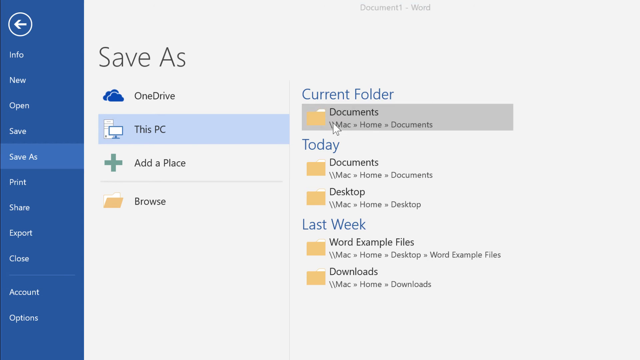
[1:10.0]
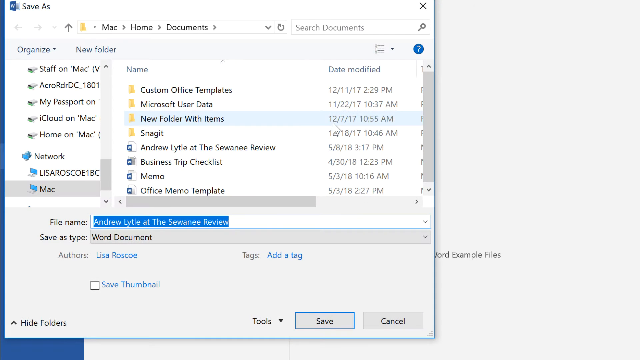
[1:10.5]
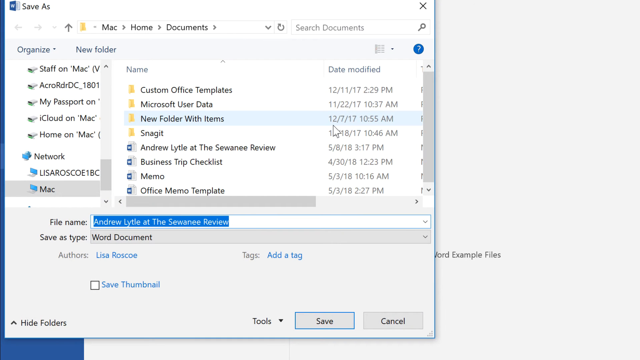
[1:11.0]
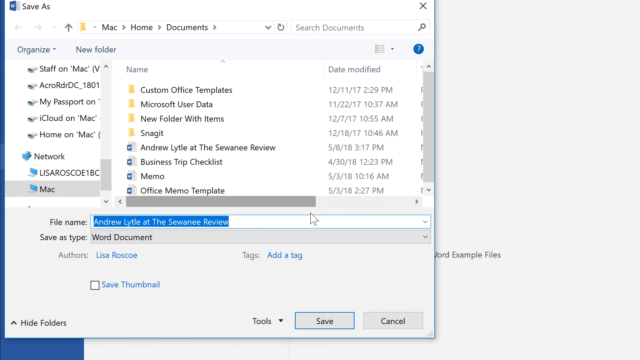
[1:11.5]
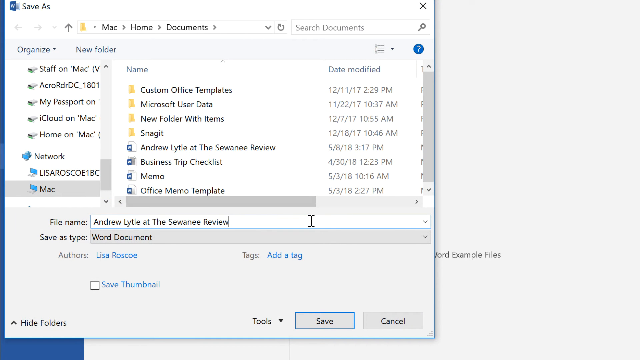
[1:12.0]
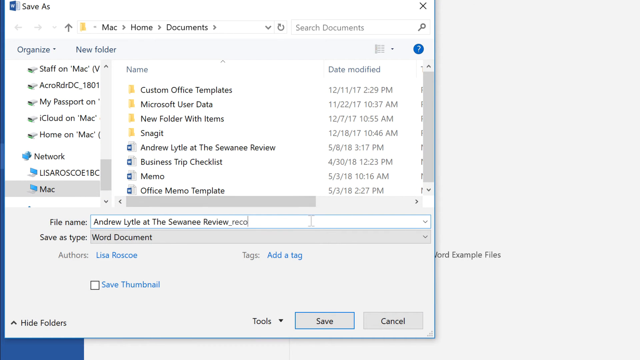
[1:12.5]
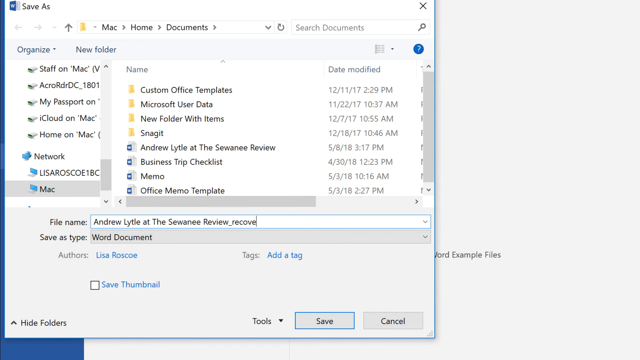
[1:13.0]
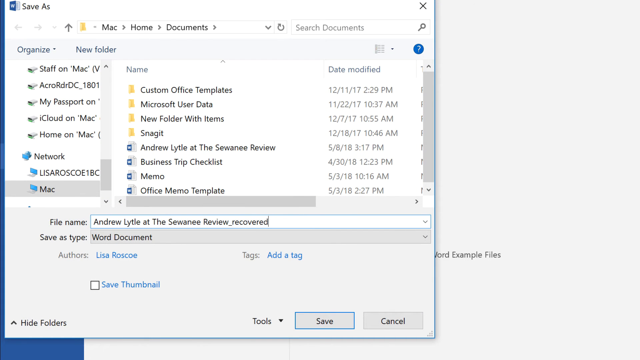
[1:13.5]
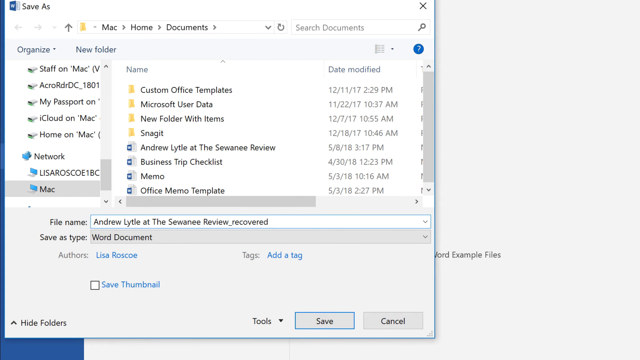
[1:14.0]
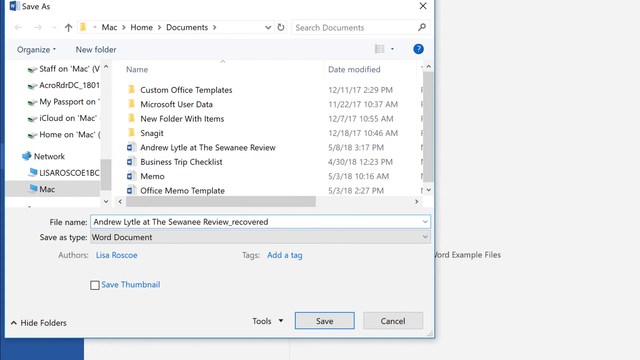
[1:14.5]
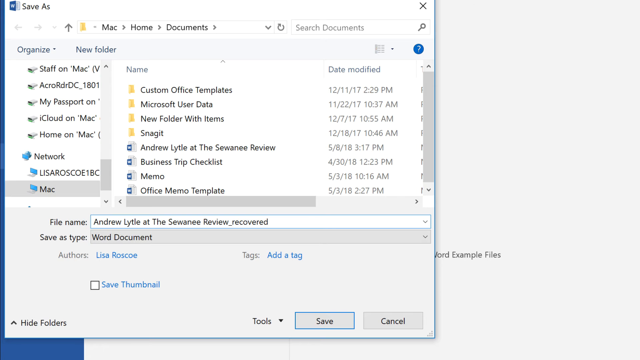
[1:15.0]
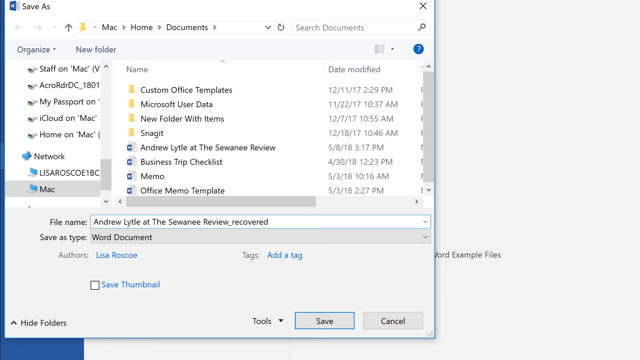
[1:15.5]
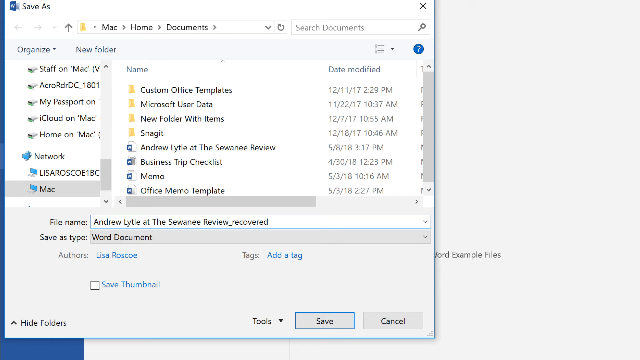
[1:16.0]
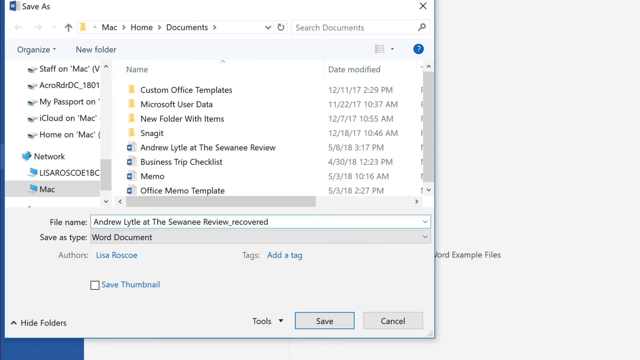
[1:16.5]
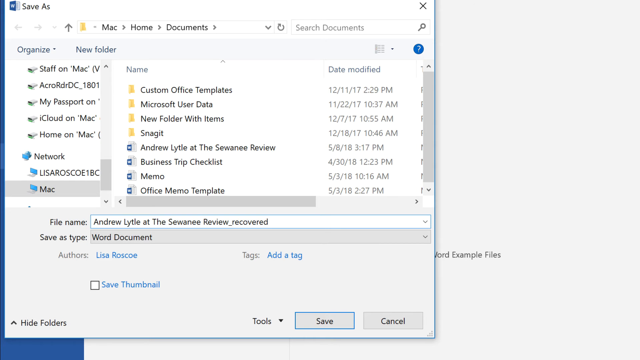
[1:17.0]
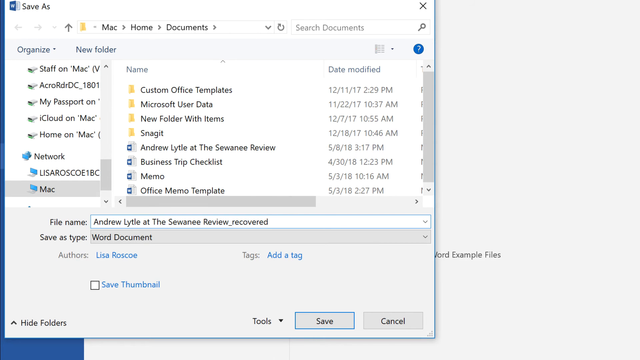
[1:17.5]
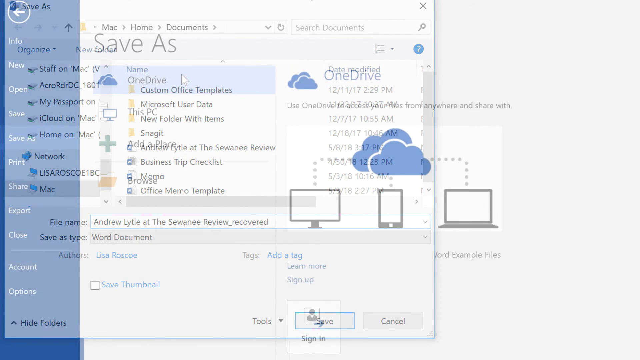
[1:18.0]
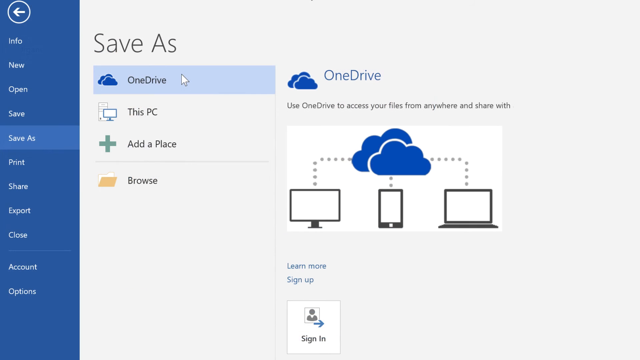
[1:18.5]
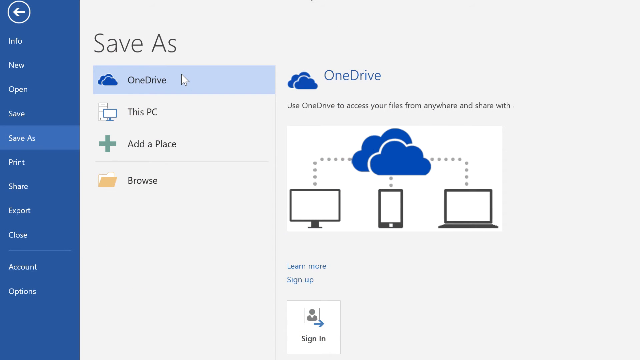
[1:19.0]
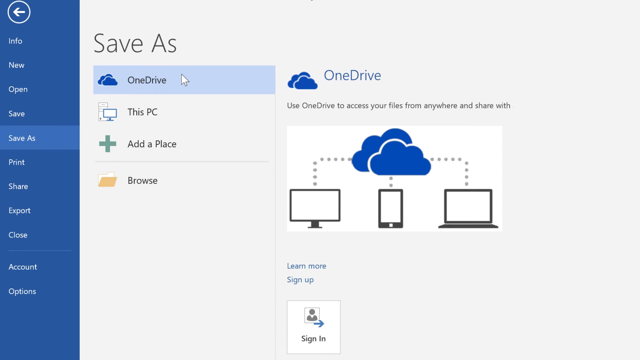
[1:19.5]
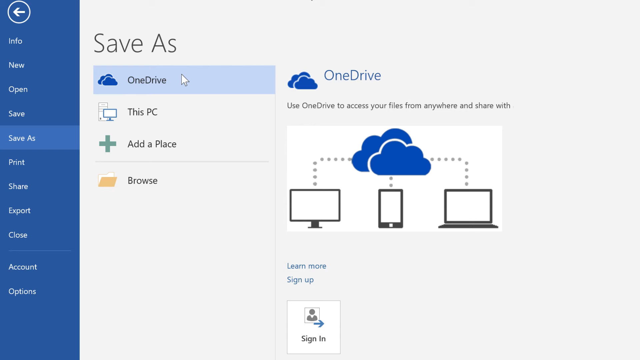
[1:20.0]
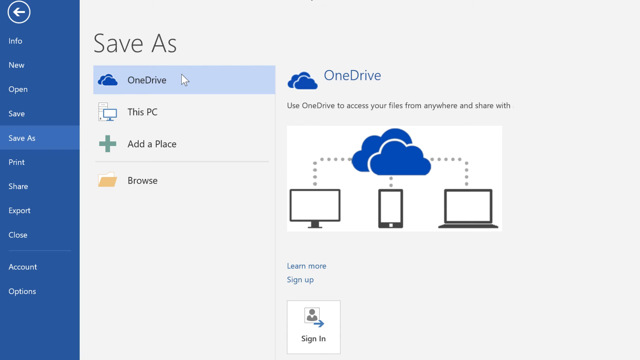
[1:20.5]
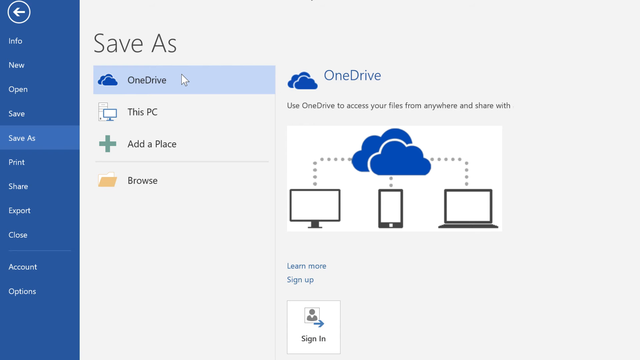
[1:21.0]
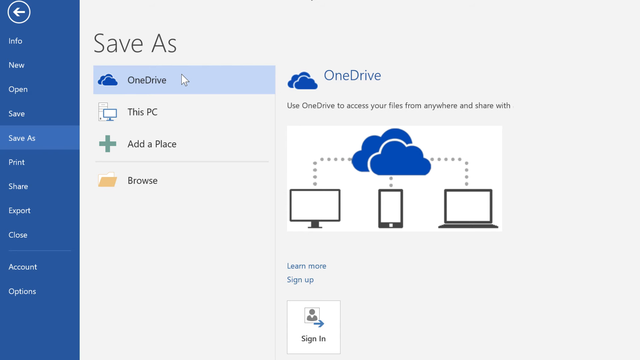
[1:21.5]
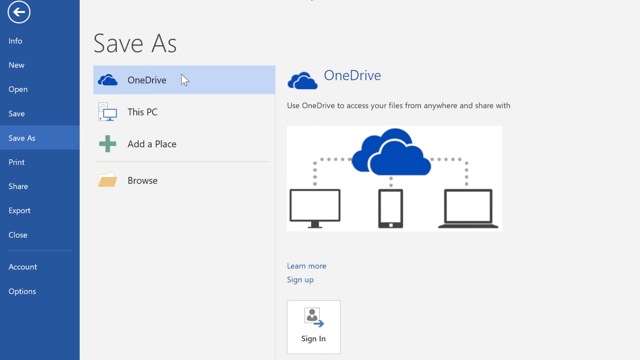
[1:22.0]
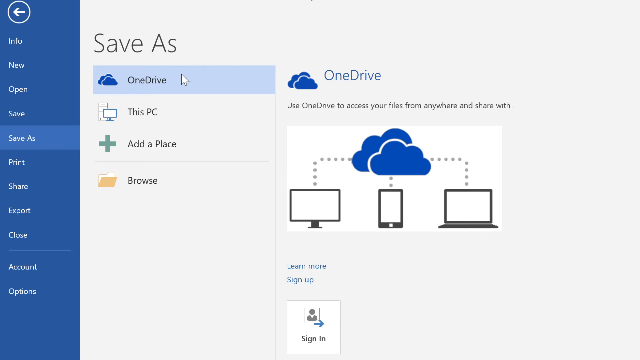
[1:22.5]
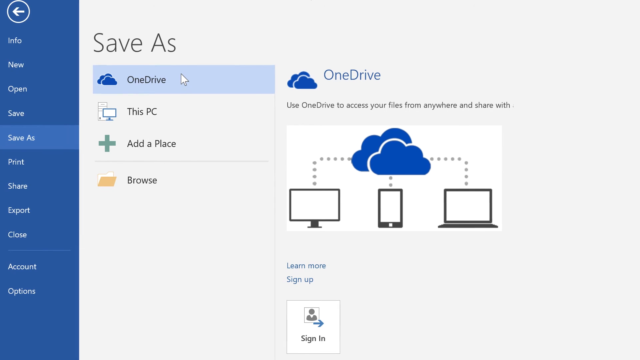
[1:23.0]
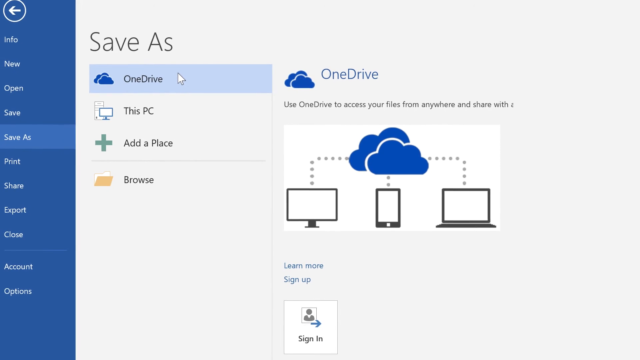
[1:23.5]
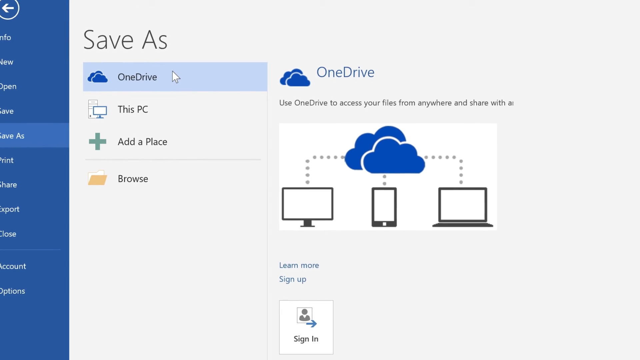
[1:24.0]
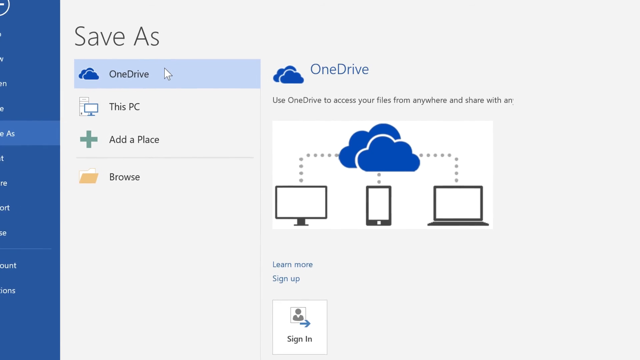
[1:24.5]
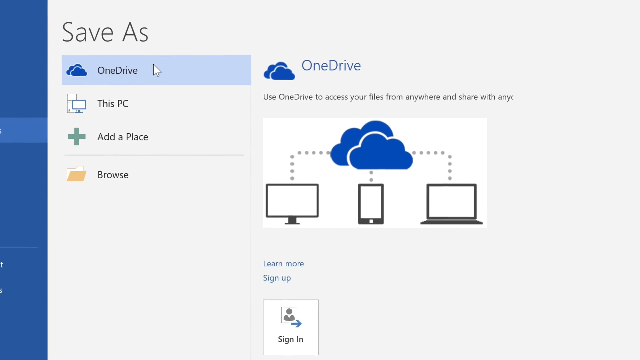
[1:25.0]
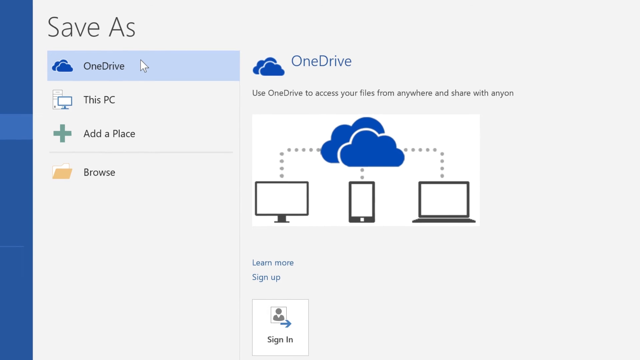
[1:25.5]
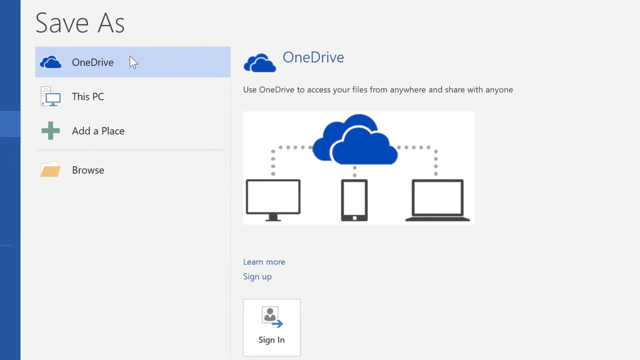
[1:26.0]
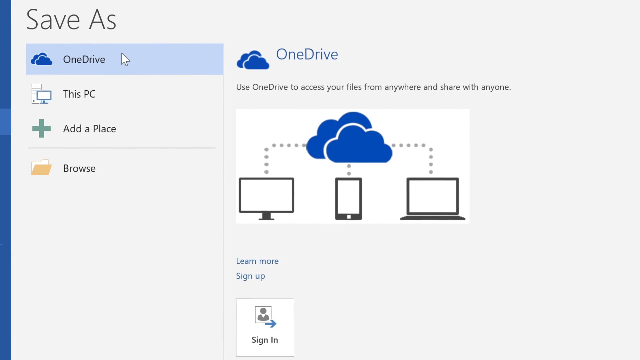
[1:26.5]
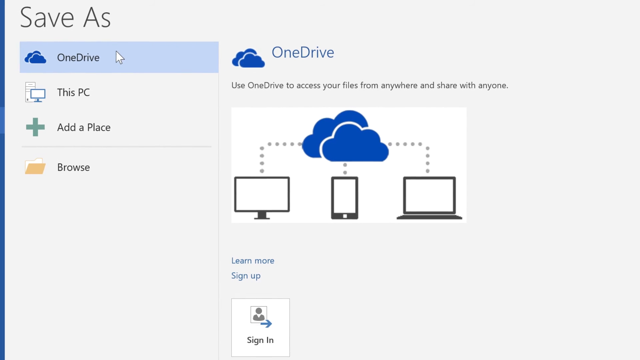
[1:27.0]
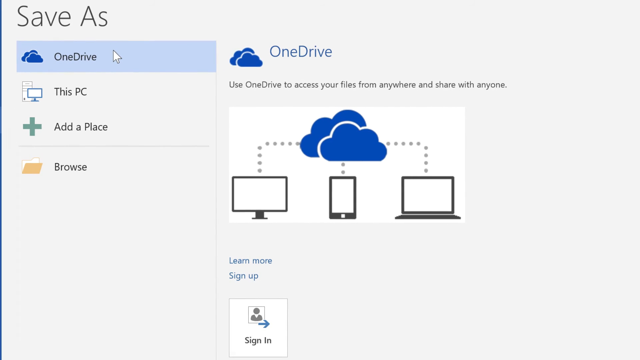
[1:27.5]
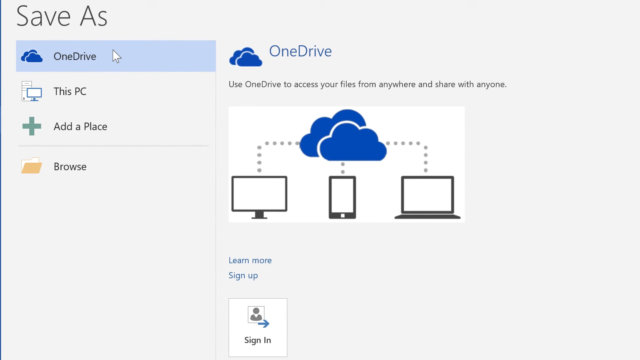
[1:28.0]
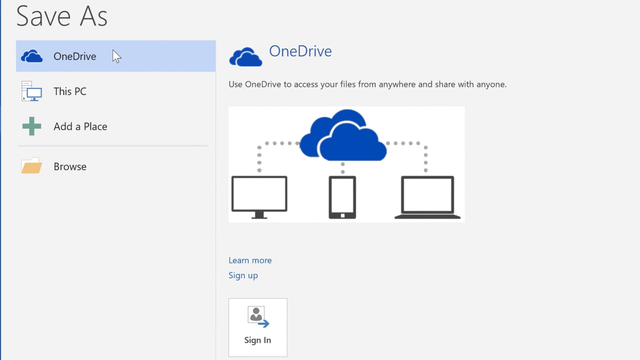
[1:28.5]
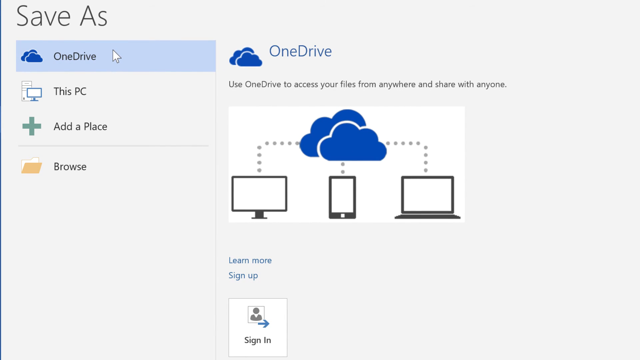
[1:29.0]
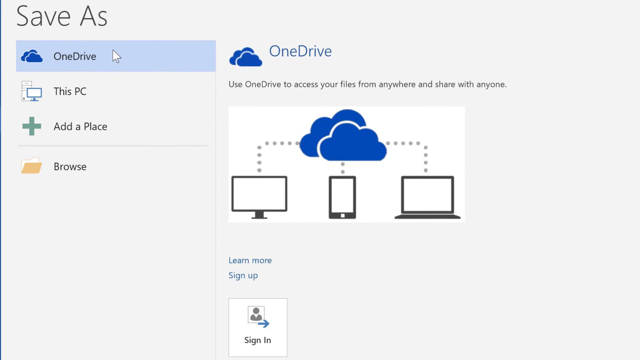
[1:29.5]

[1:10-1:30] Microsoft Word, possibly an older version and apparently the Mac version, shows a blue panel on the left with a white arrow inside a circle, pointing left. Under the arrow is a list of options: info, new, open, save, save as, print, share, export, close, account. The user appears to click Save As and chooses This PC; the other options are OneDrive, Add a Place and Browse. Choosing This PC brings up folders on the PC: the current folder with some documents under it, plus other options such as today's folders and older folders. The user chooses the file and the place to save it and saves it. The user then looks at OneDrive.